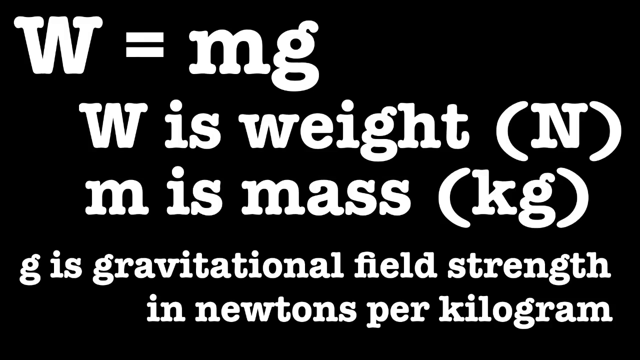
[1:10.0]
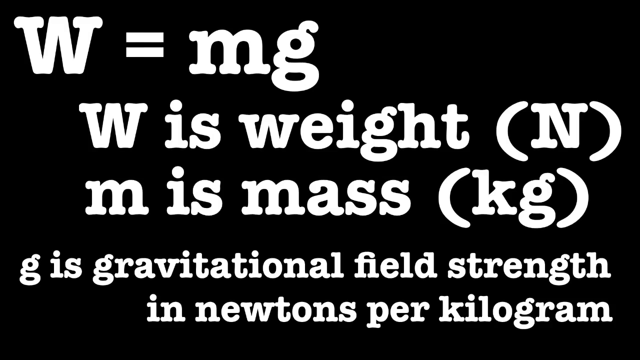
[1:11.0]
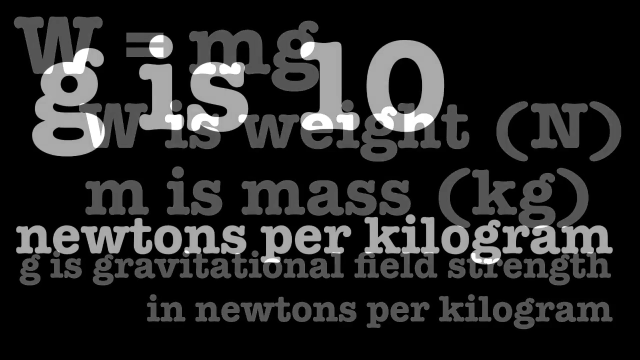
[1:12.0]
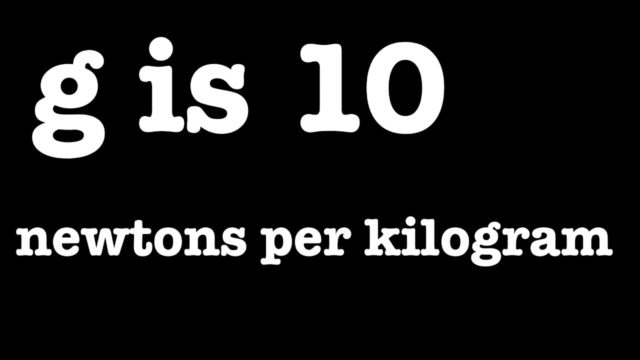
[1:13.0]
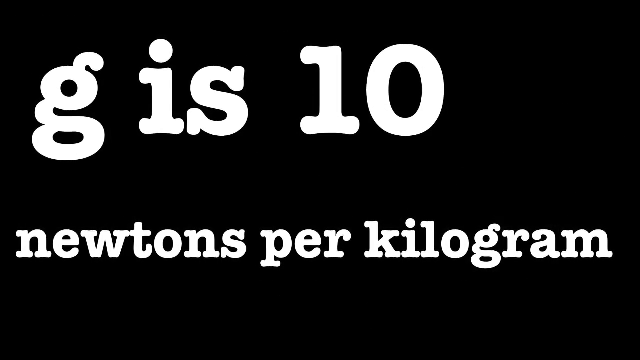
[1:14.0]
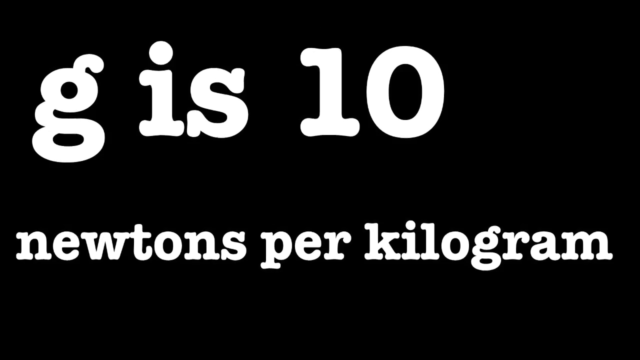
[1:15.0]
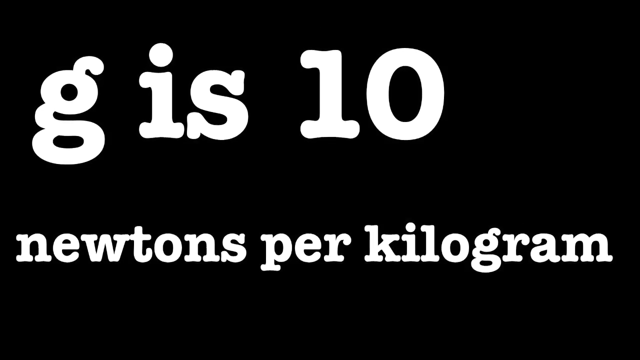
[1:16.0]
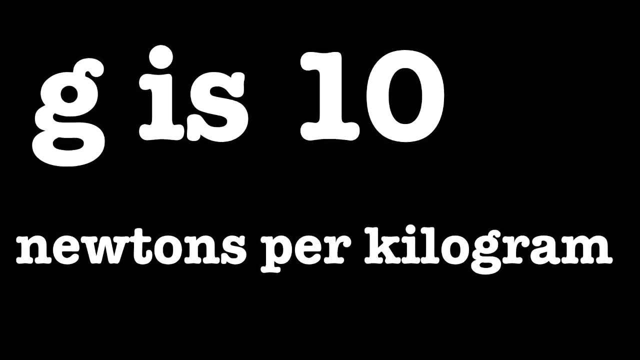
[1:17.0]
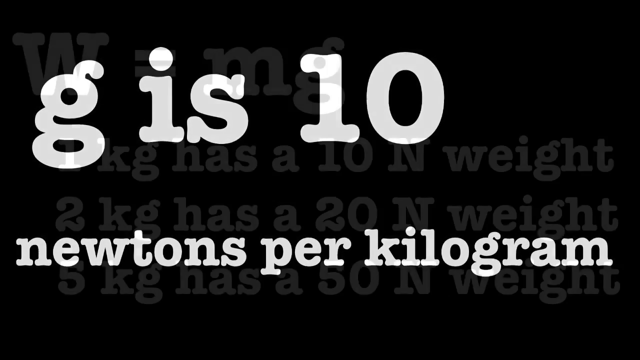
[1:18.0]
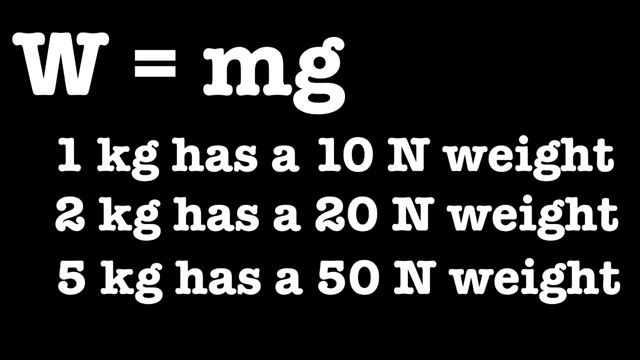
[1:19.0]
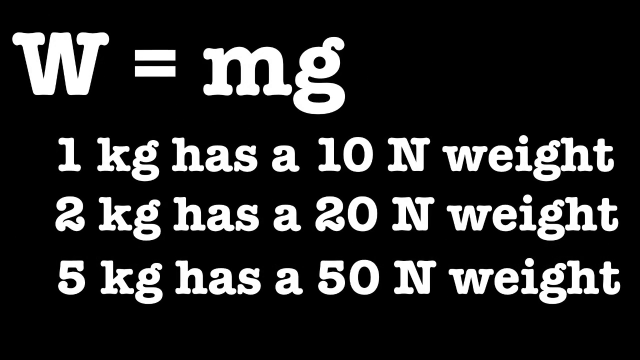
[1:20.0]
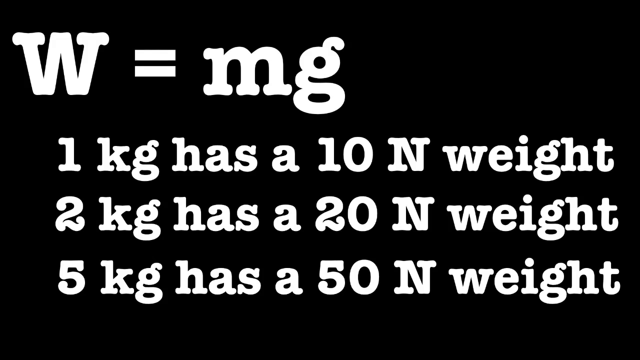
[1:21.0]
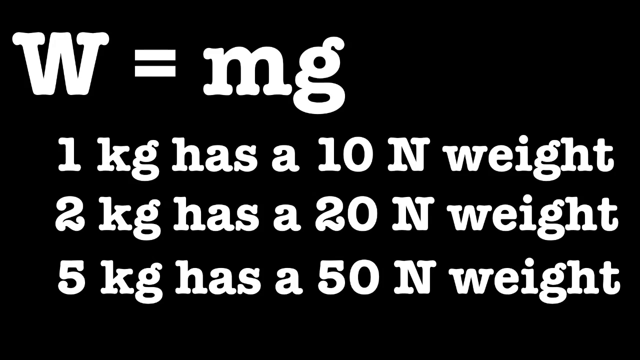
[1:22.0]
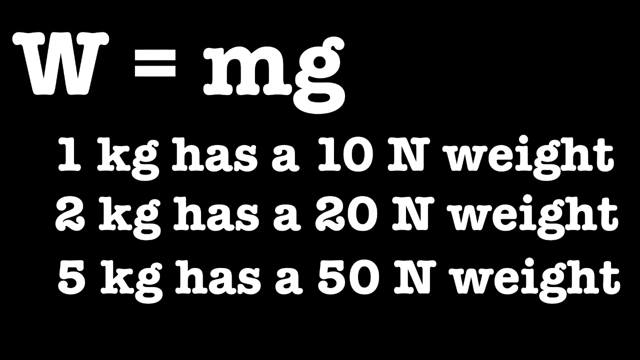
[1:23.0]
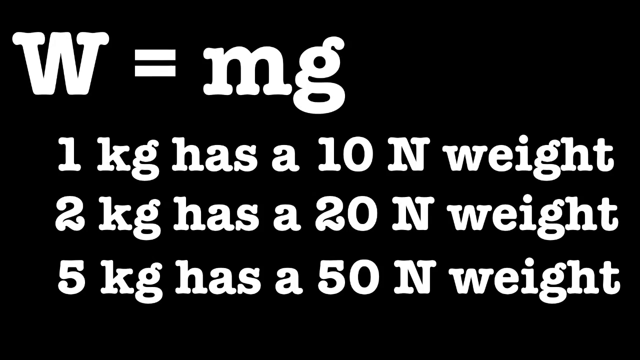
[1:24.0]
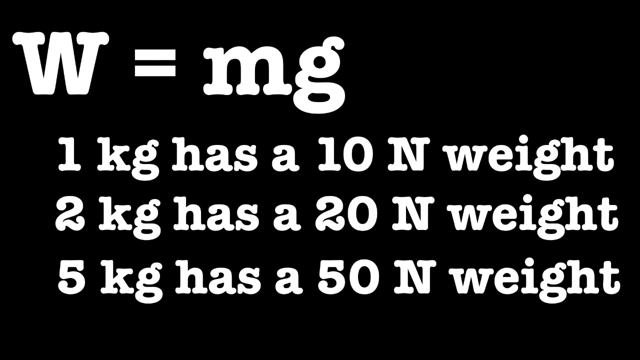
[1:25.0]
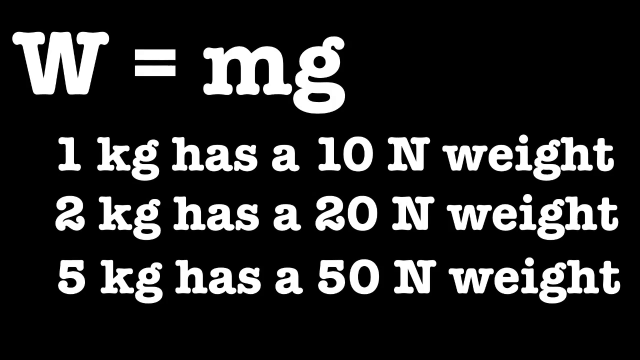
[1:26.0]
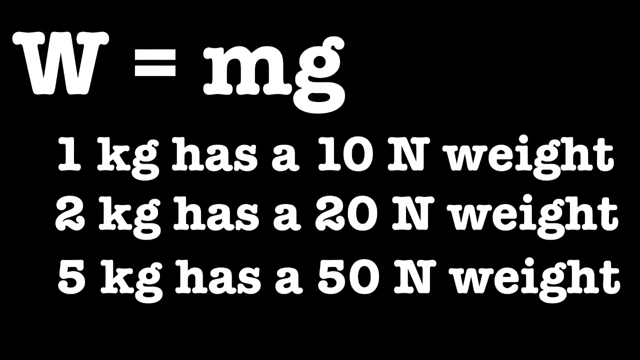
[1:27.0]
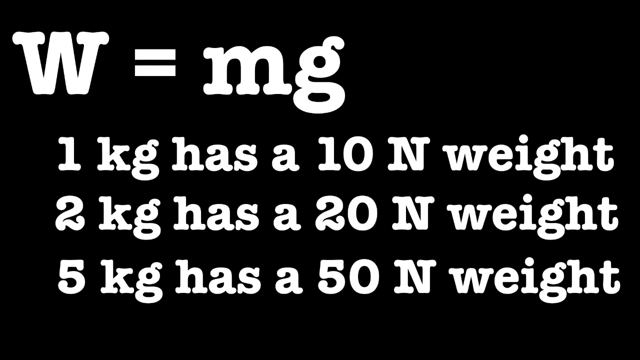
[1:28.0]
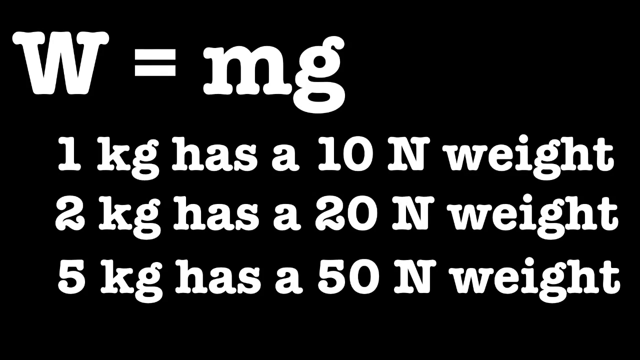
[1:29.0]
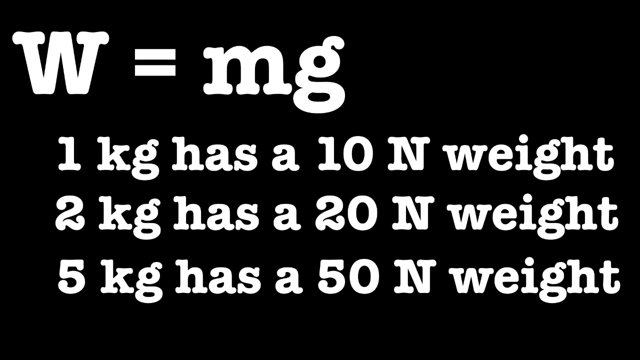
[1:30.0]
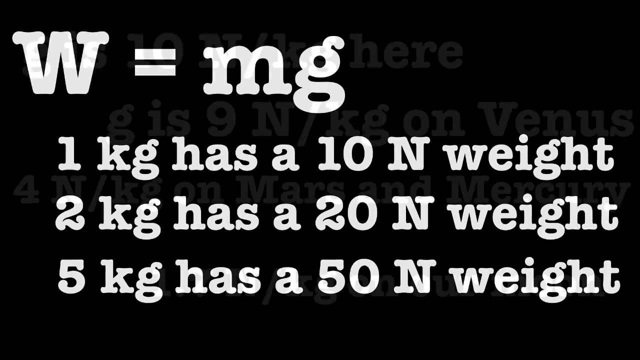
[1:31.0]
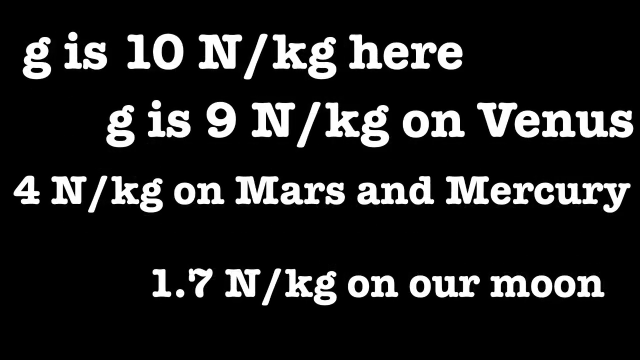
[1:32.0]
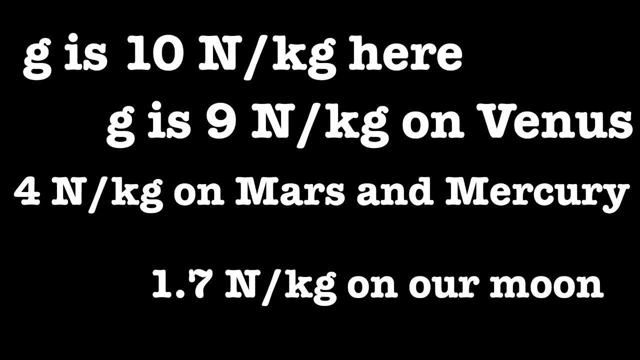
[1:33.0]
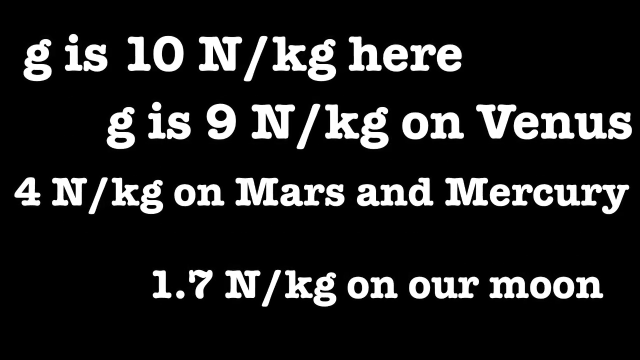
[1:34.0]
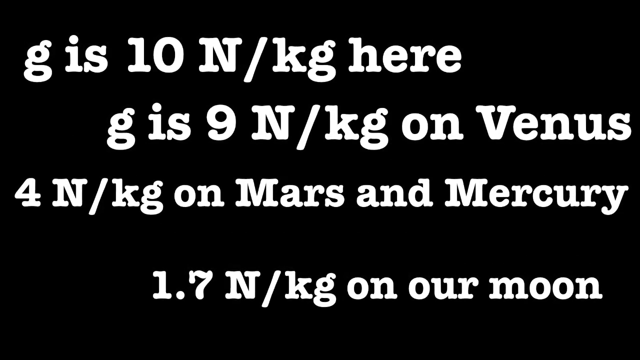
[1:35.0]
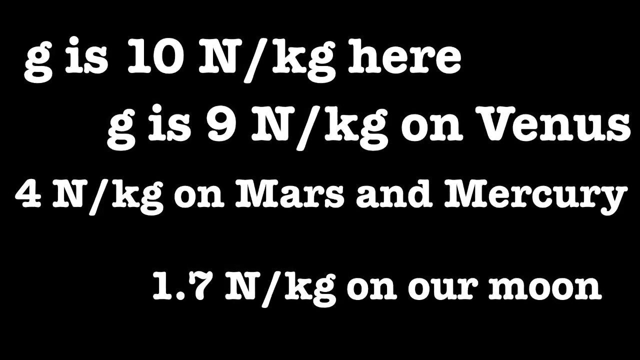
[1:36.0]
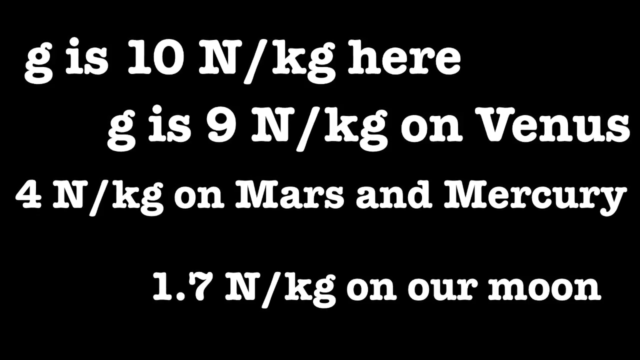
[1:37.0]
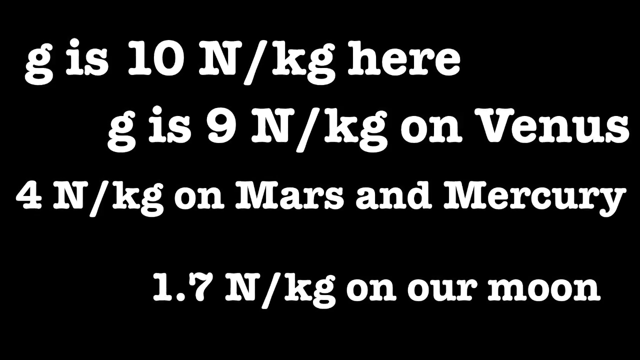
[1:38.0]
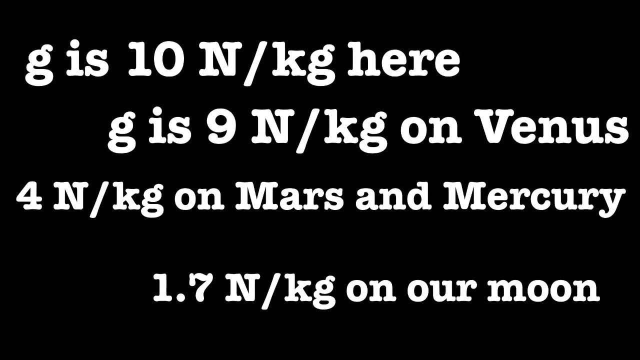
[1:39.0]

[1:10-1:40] A black screen reads "W = mg." Below that it reads "W is weight," with "(N)" to the right; below that, "m is mass," with "(kg)" to the right; below this, "g is gravitational field strength"; and below this, "in newtons per kilogram." Everything is in white letters. Then another black screen appears with white letters reading "g is 10" and, below that, "newtons per kilogram." Another black screen follows, reading "W = mg," with "1kg has a 10N weight," "2kg has a 20N weight" and "5kg has a 50N weight" listed below. The video switches to another black screen that reads at the top "g is 10 N/kg here," then below it "g is 9 N/kg on Venus," "4 N/kg on Mars and Mercury" and "1.7 N/kg on our moon."